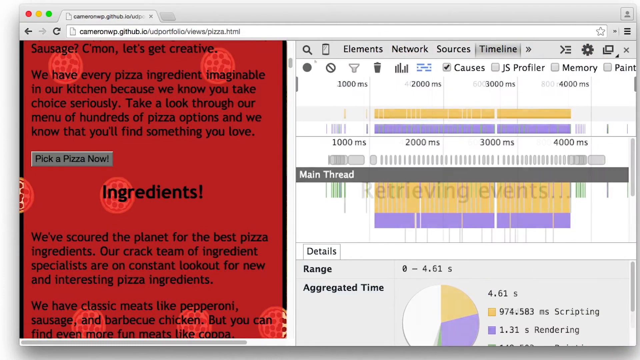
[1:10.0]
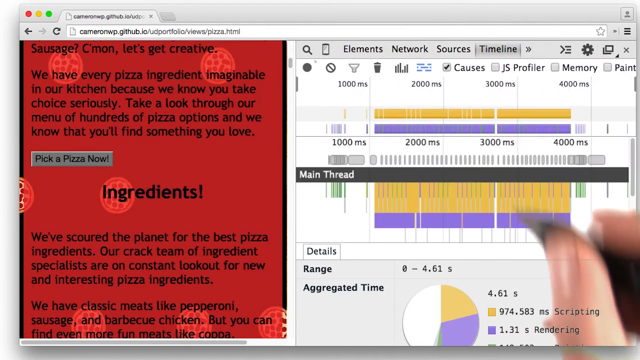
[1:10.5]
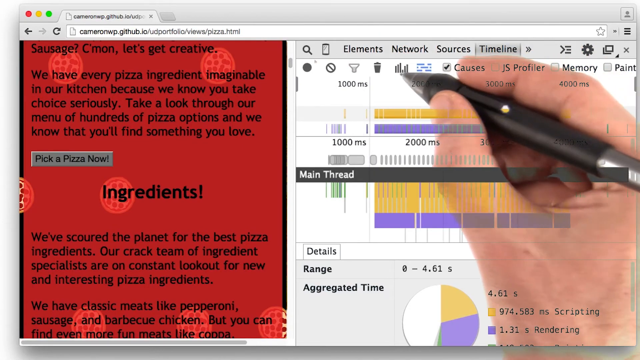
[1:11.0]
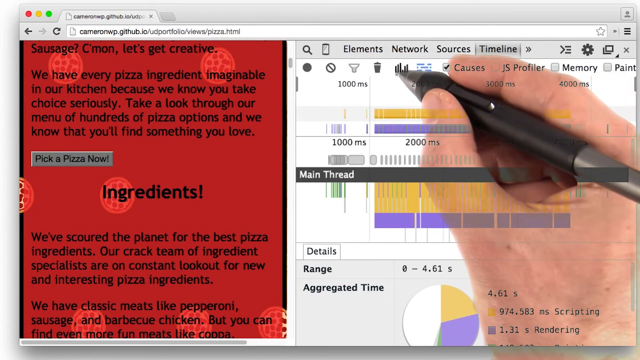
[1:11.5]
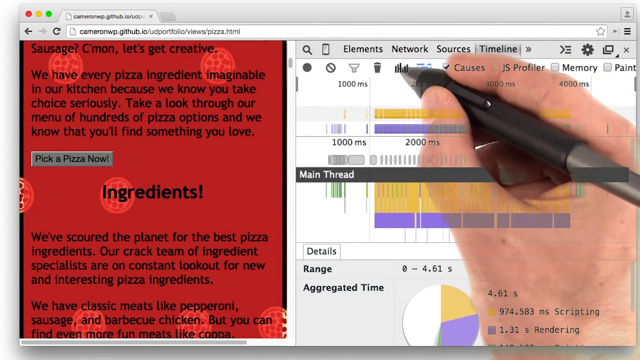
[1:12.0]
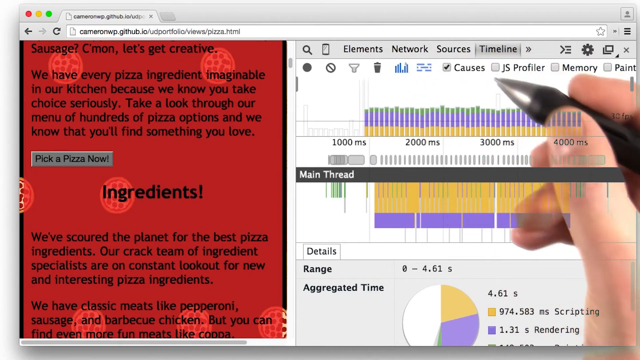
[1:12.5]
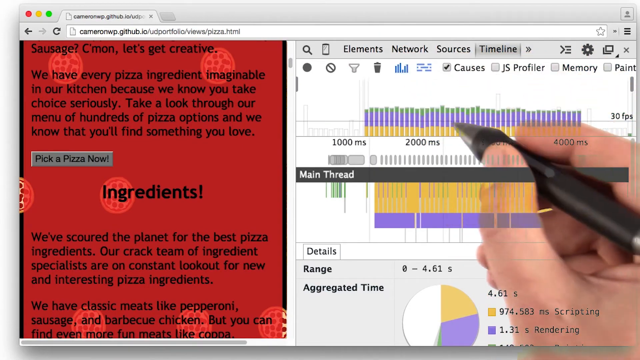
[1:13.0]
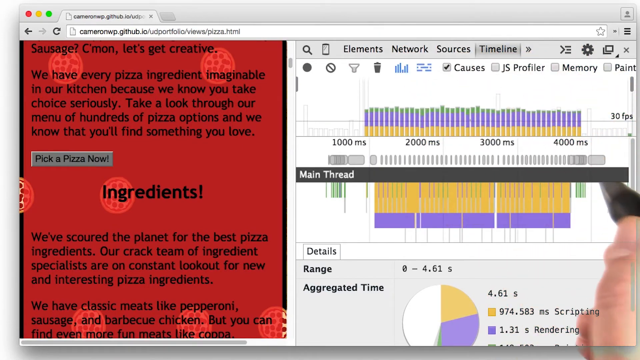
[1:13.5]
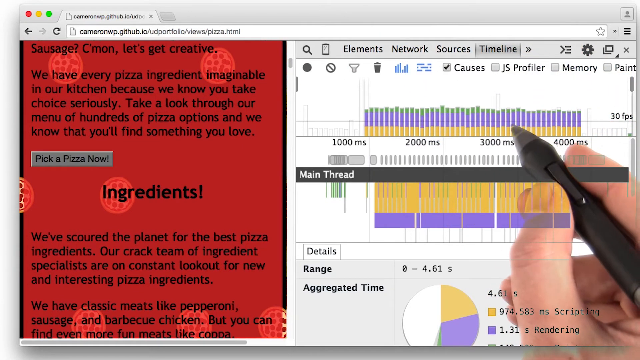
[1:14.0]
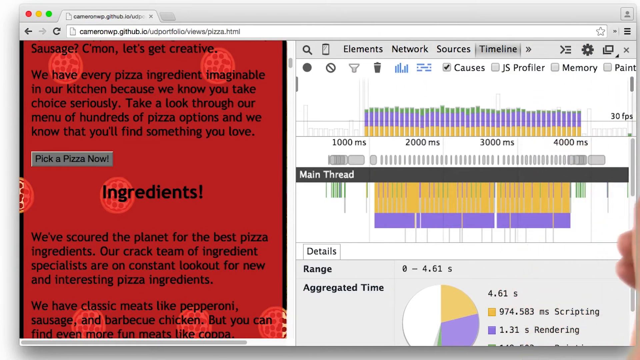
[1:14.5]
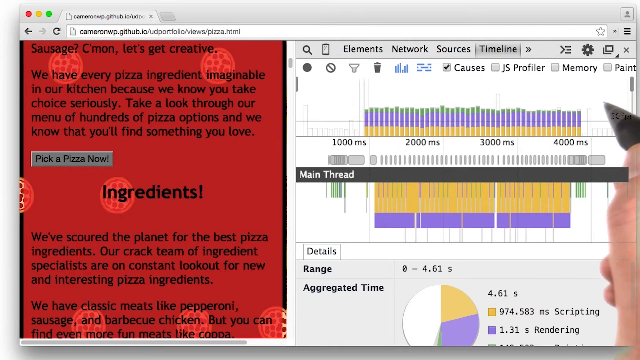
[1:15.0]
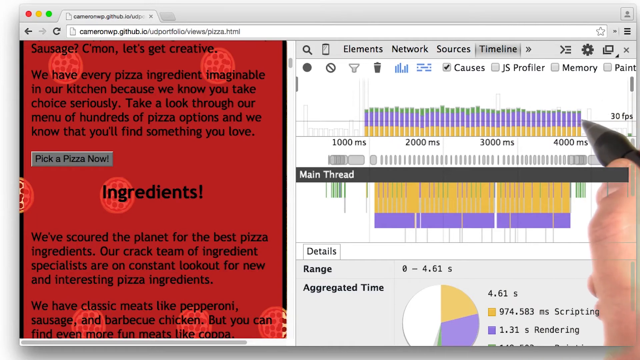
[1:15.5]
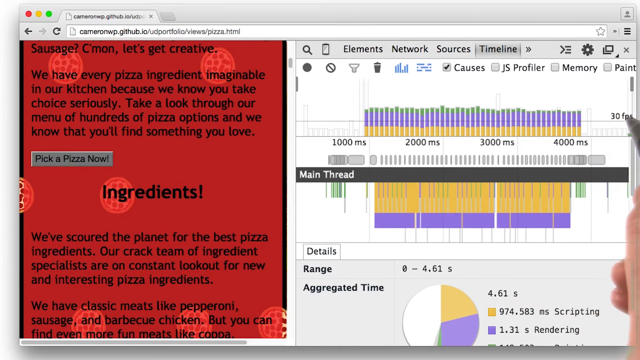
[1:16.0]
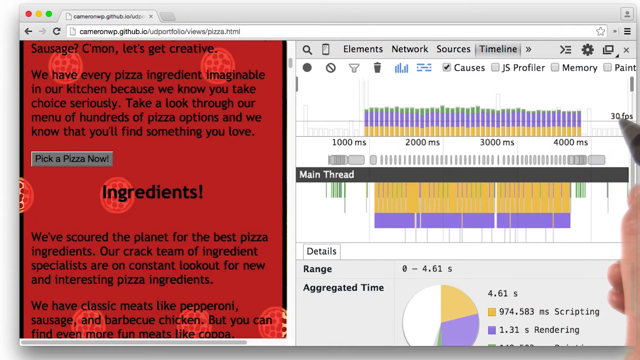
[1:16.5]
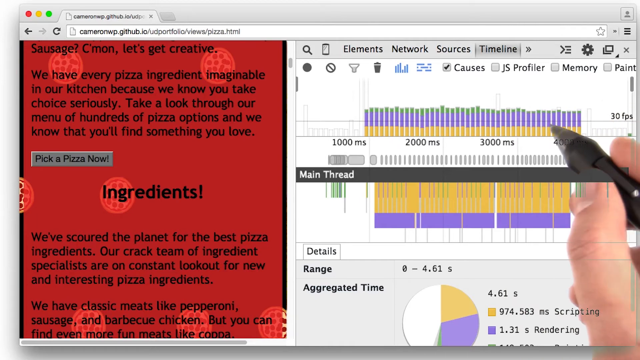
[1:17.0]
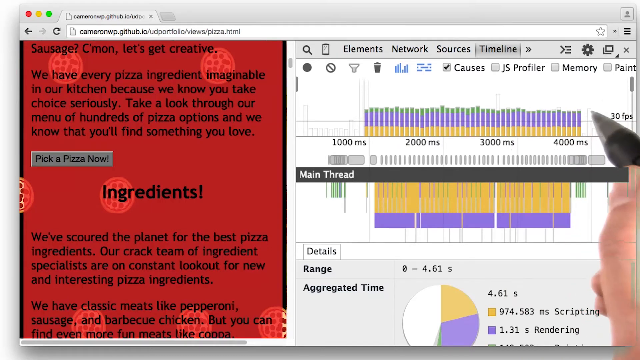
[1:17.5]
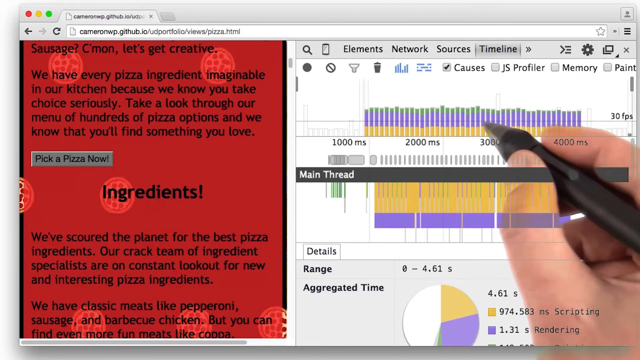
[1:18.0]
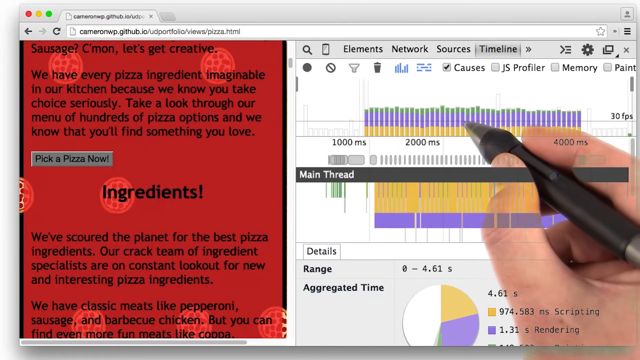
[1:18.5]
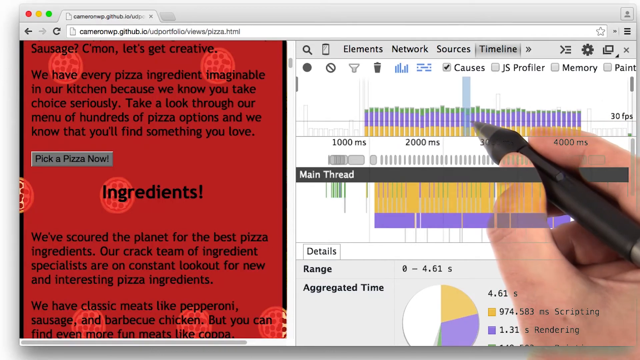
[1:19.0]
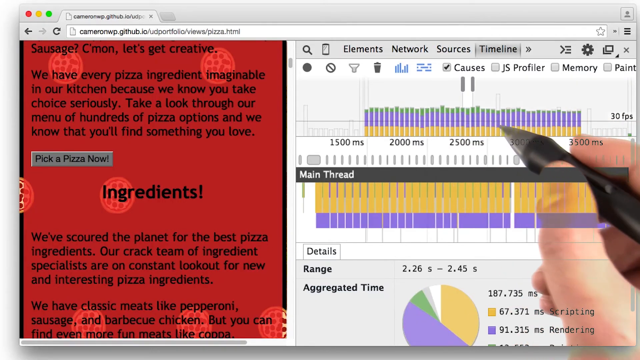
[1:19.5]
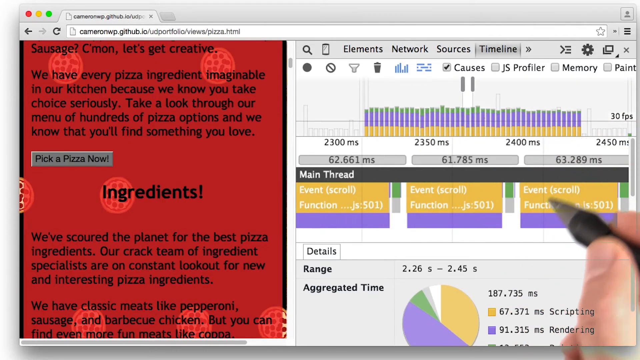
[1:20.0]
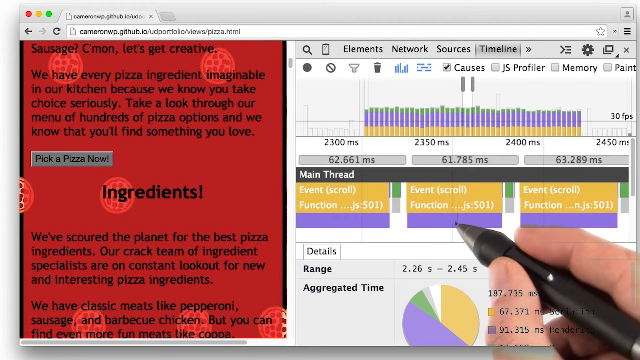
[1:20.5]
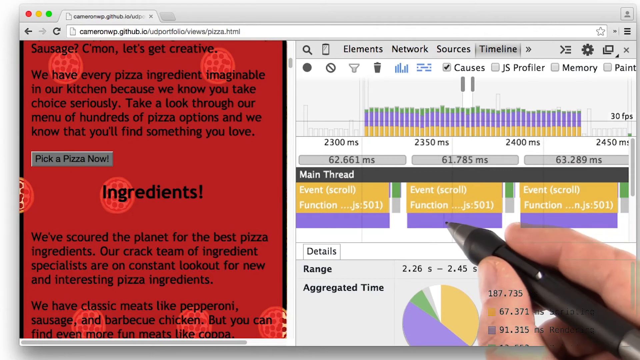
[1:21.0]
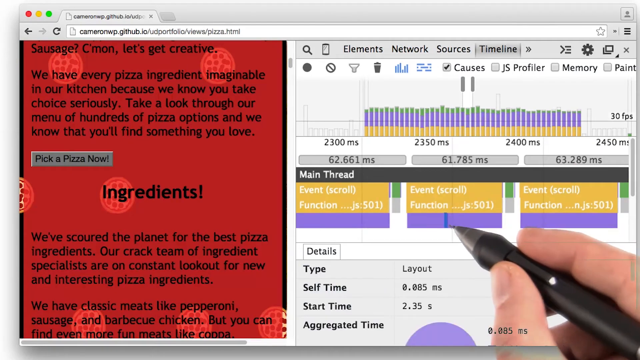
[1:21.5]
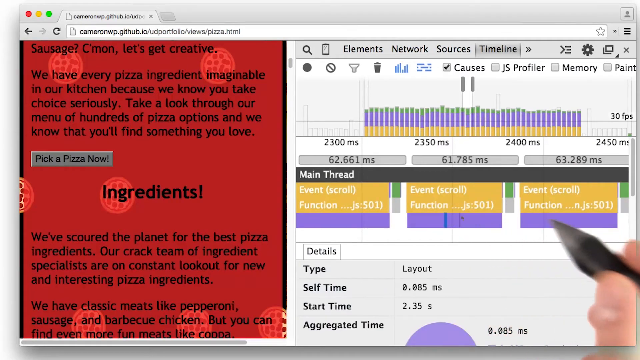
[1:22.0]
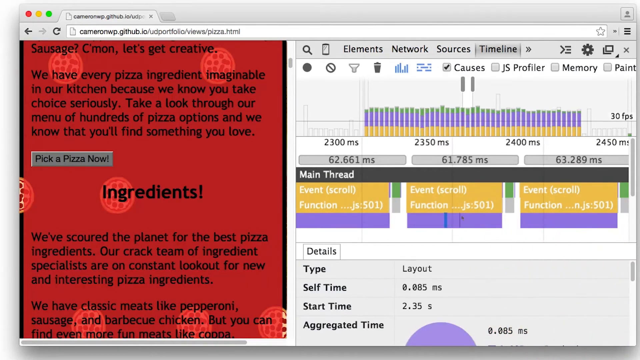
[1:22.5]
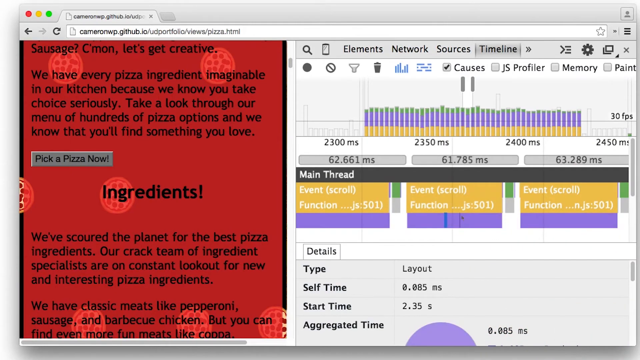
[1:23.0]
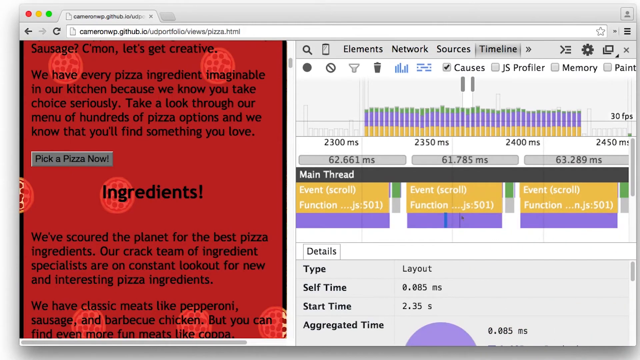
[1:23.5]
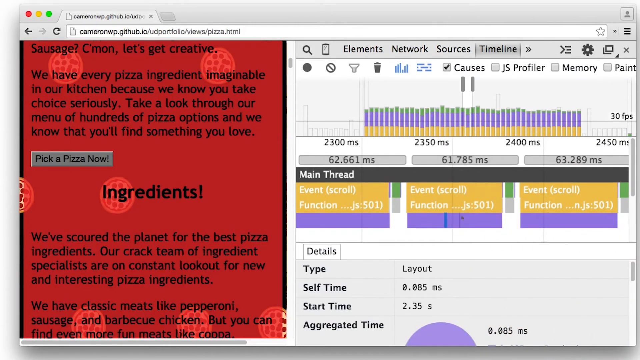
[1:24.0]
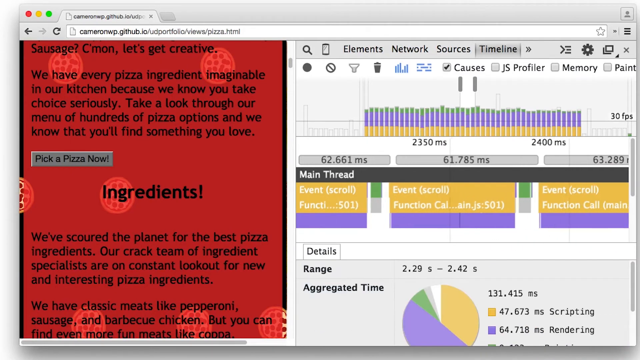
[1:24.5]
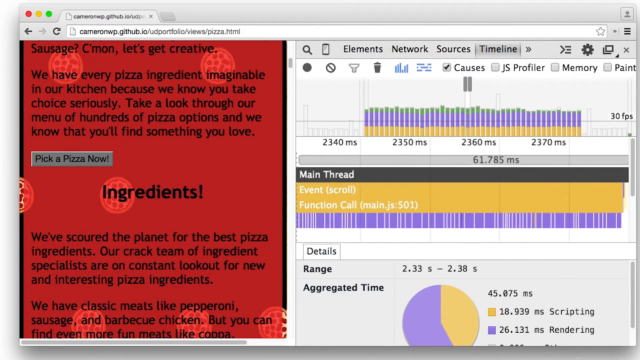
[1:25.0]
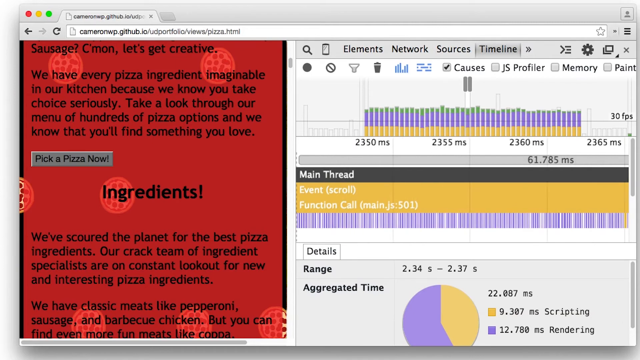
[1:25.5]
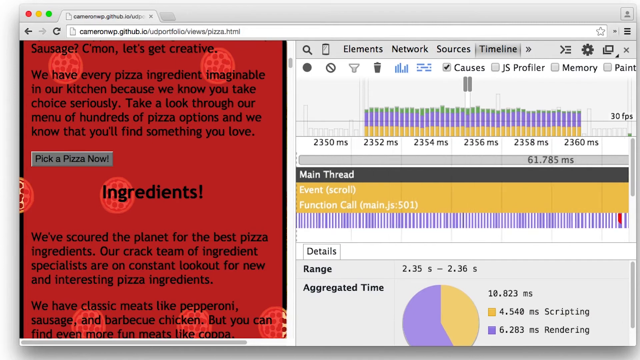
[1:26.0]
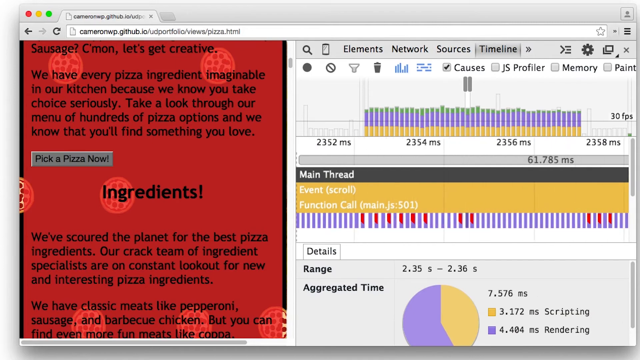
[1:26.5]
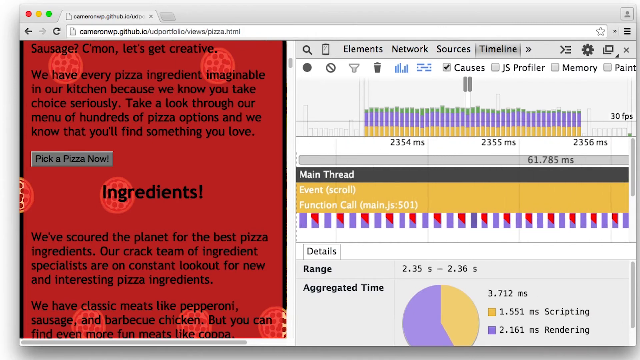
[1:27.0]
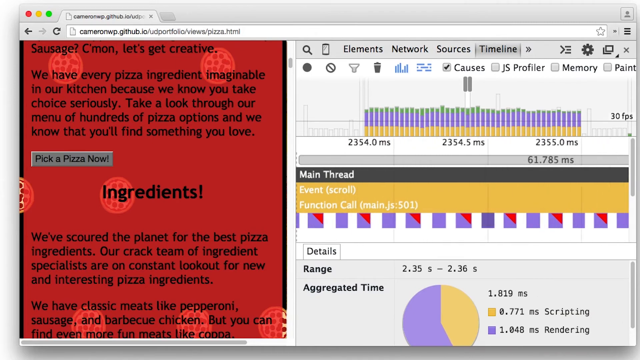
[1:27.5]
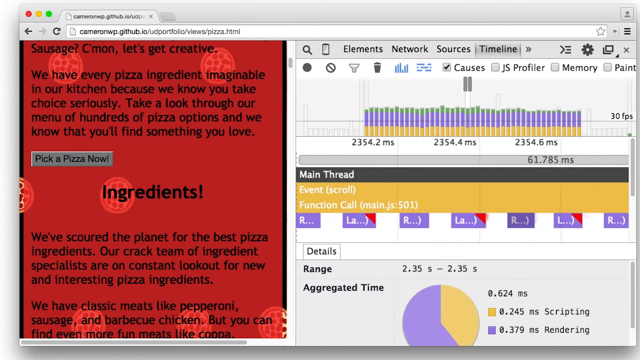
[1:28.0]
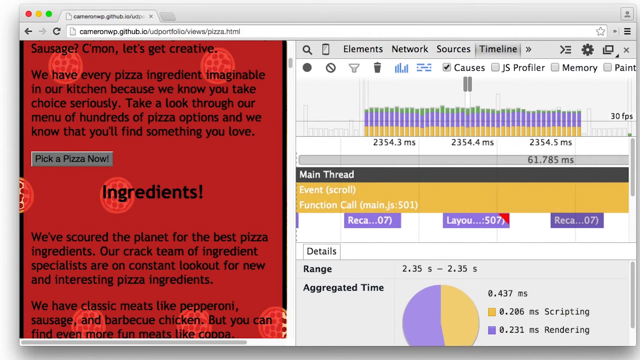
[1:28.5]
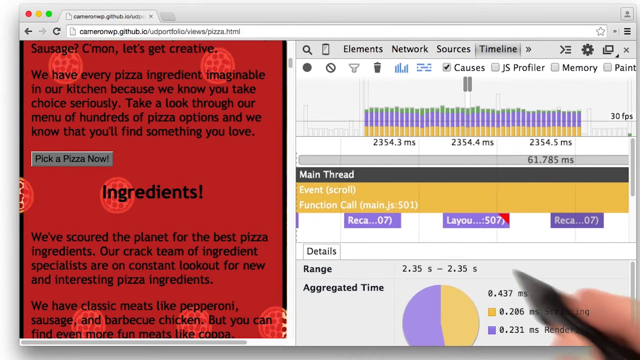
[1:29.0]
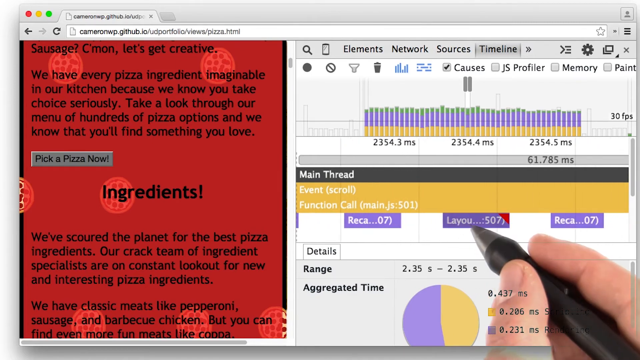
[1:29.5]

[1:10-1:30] The presenter looks at the timeline; it looks like they click the timeline and view the main thread. At the very top are a number of settings: the record button at the top left, a clear button, a filter button, a trash button, and one with a bars icon. He clicks the bars icon, and a bar graph appears with times of 1,000, 2,000, 3,000 and 4,000 milliseconds along the top. He moves his pencil over the chart, highlights the middle section around 2,350 and 2,400 milliseconds, and slides it across a little. Something changes at the bottom, which shows "main thread event scroll function" in three boxes. Below that are details: type, self-time, start time. He expands the main thread section, giving a more zoomed-in view of the time, and clicks on one of the layouts, seemingly to examine a specific time period.